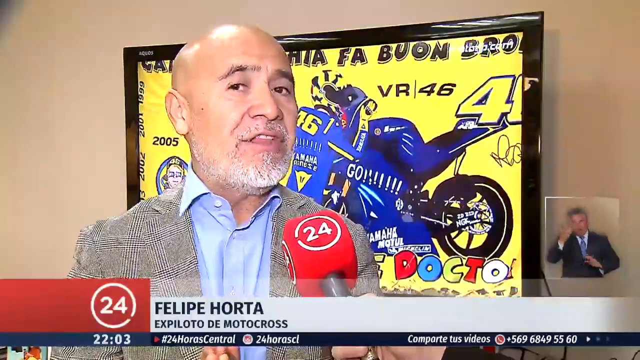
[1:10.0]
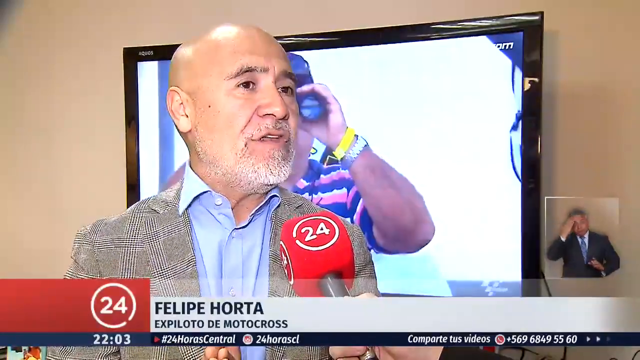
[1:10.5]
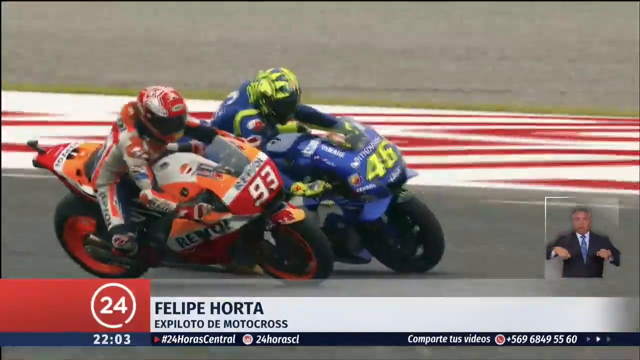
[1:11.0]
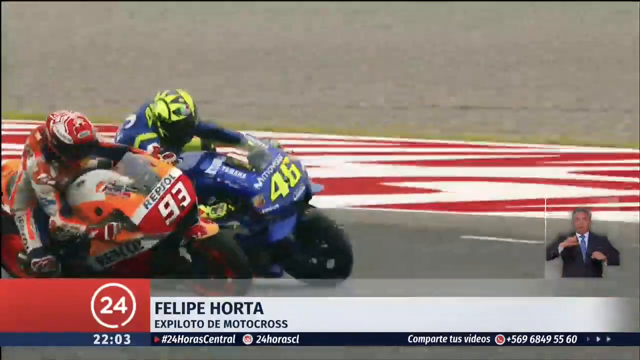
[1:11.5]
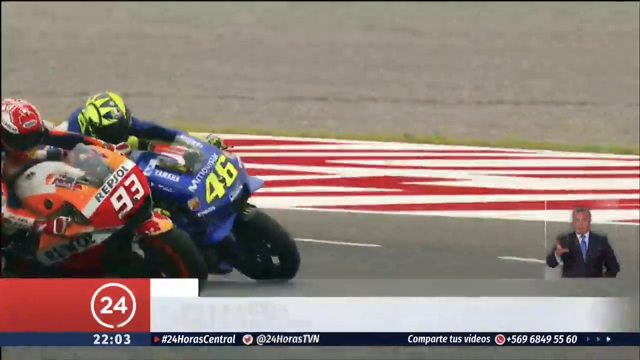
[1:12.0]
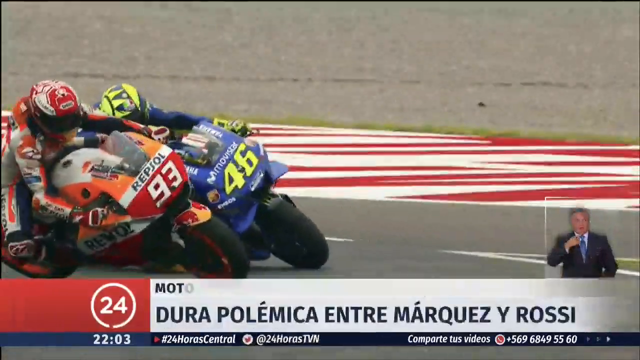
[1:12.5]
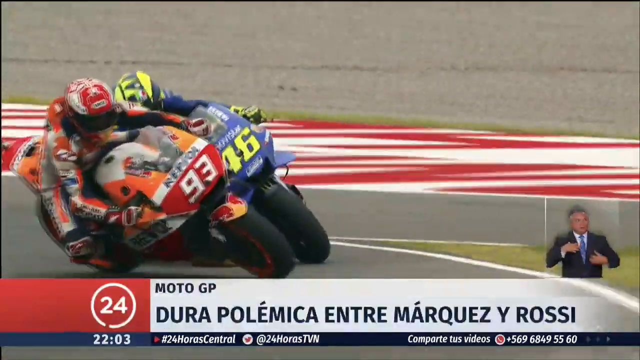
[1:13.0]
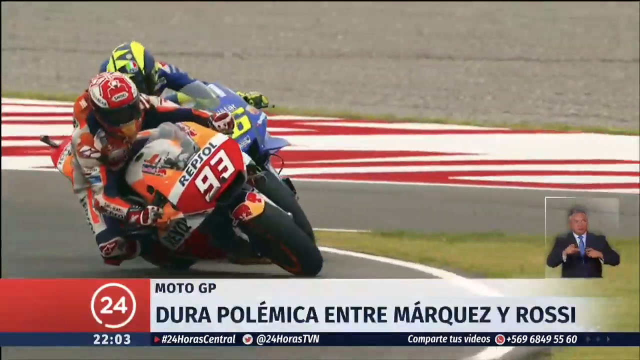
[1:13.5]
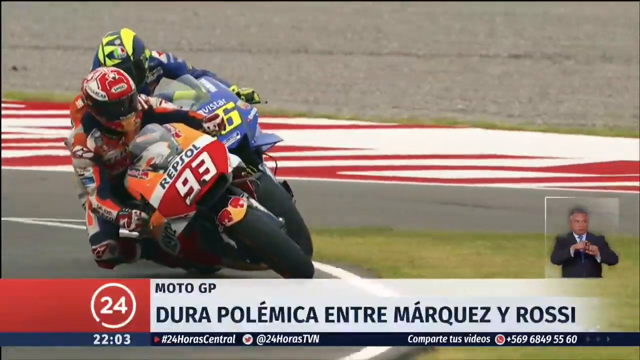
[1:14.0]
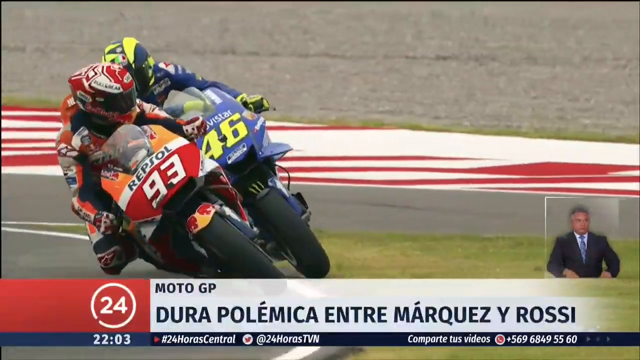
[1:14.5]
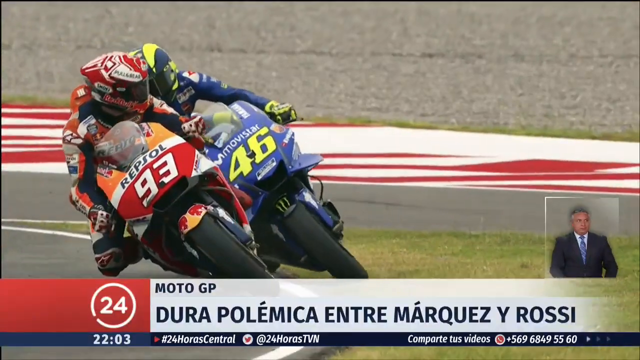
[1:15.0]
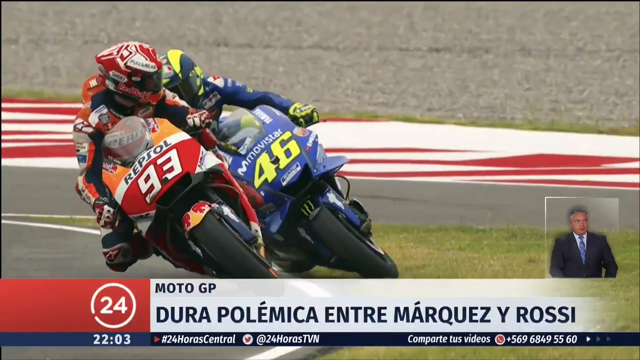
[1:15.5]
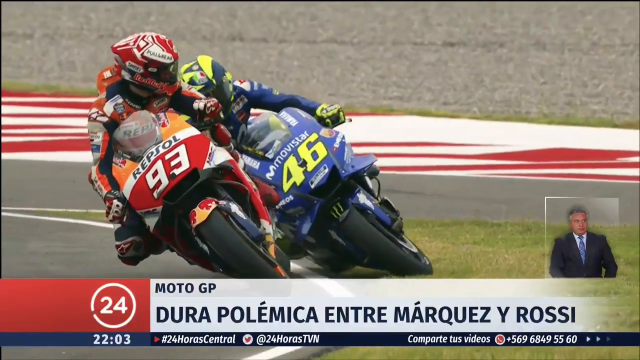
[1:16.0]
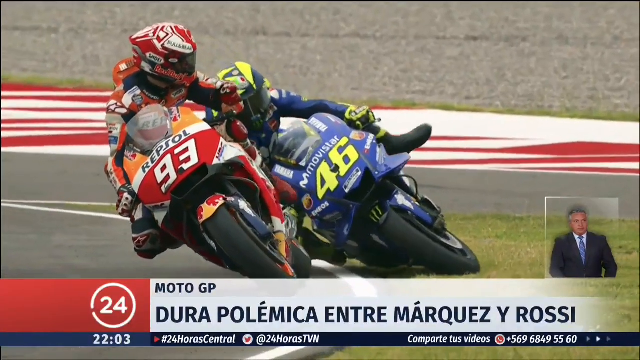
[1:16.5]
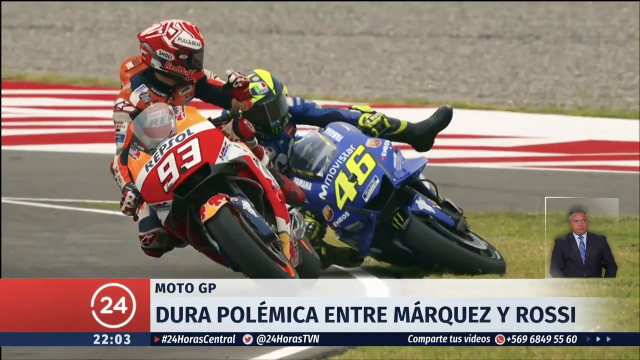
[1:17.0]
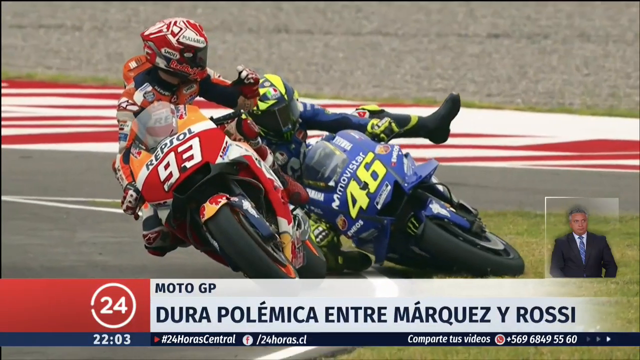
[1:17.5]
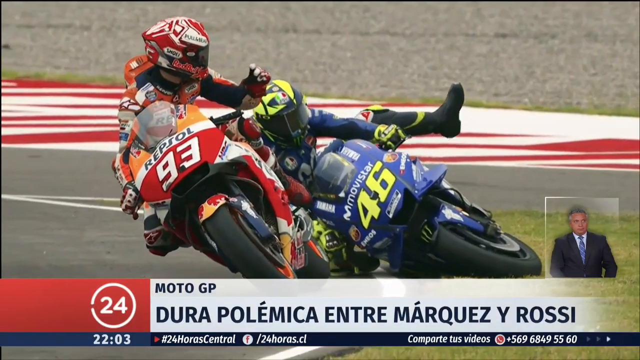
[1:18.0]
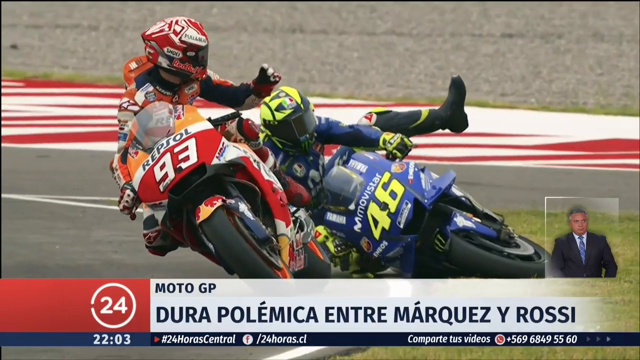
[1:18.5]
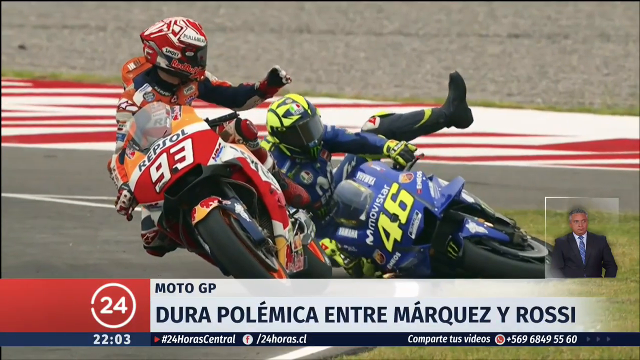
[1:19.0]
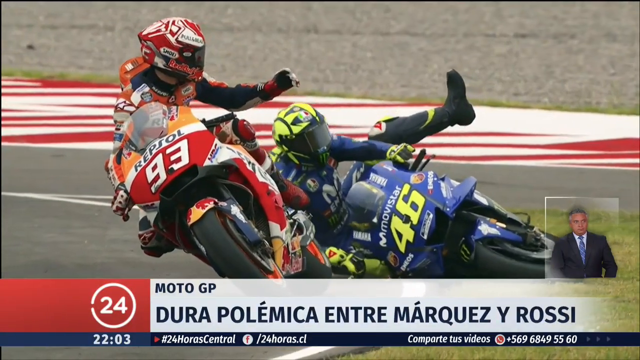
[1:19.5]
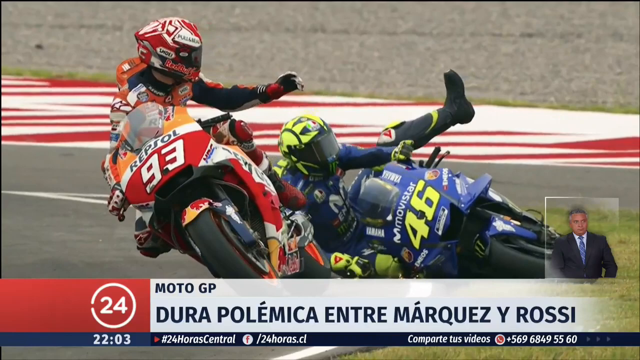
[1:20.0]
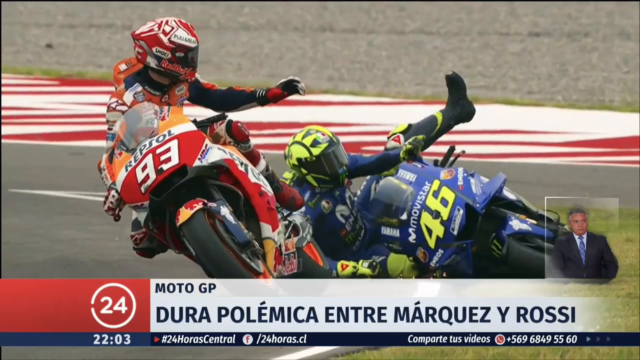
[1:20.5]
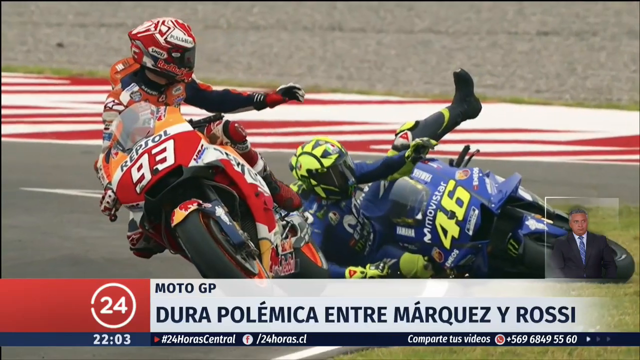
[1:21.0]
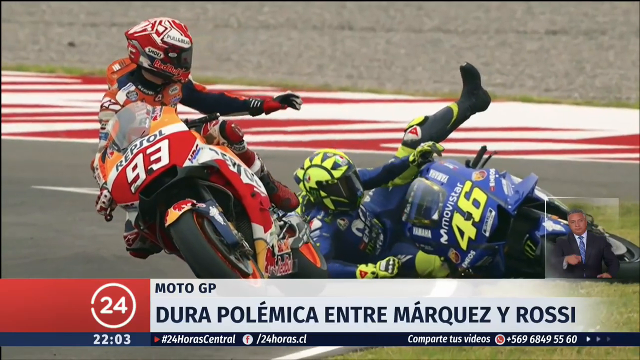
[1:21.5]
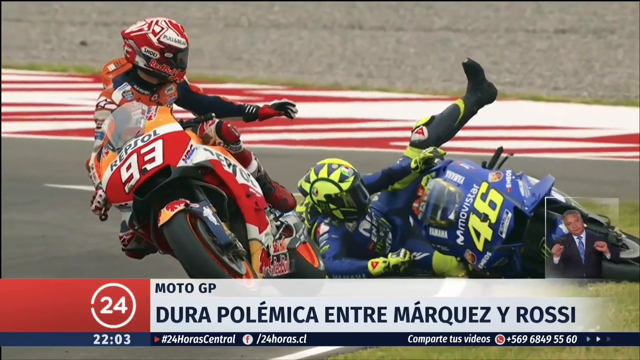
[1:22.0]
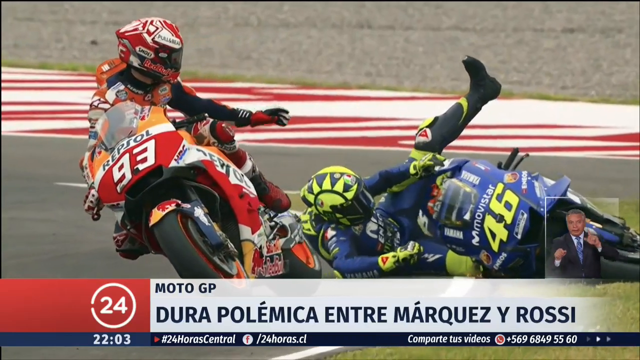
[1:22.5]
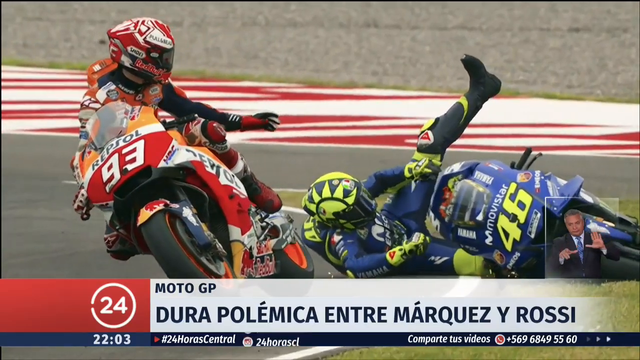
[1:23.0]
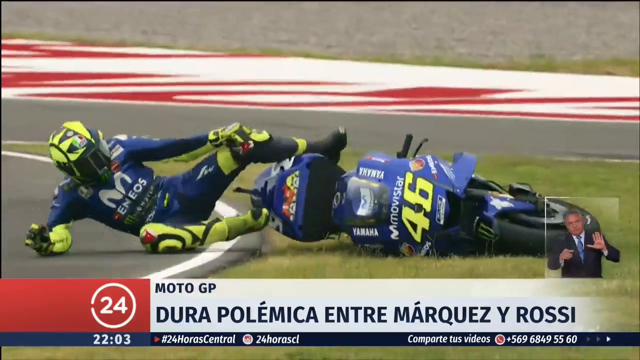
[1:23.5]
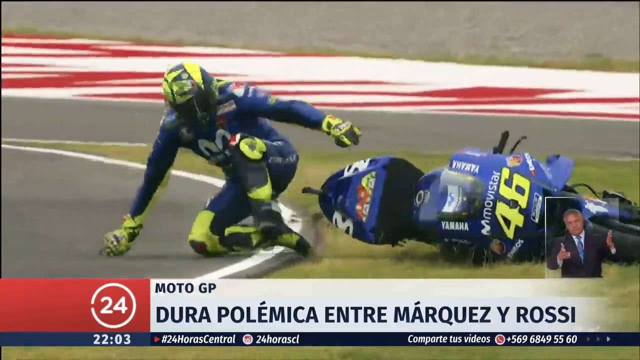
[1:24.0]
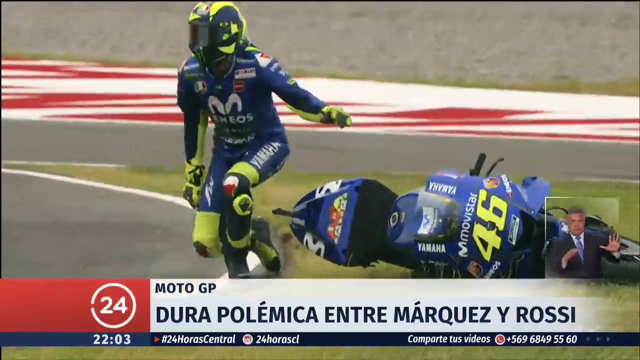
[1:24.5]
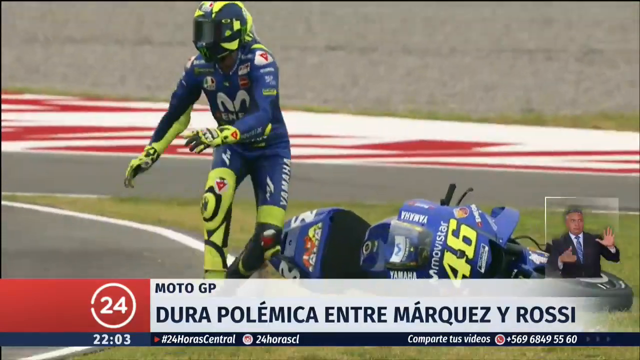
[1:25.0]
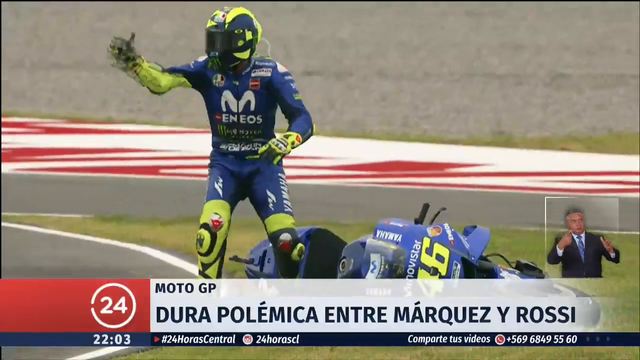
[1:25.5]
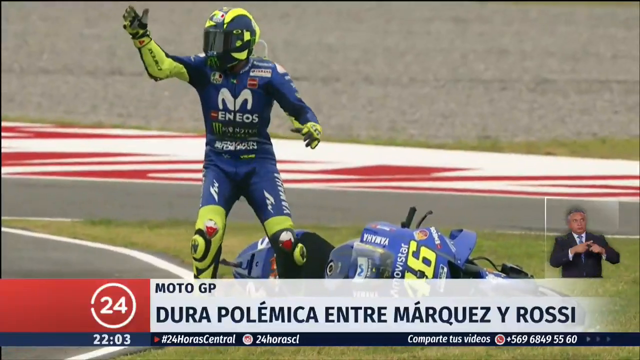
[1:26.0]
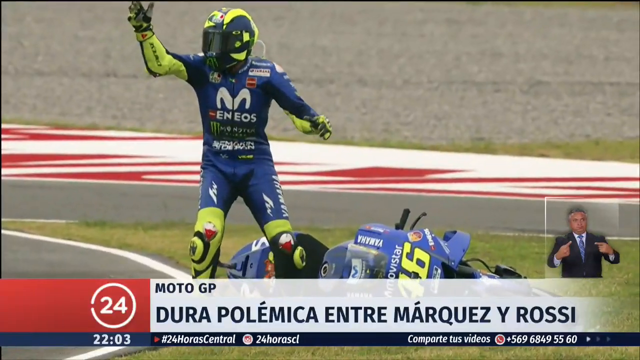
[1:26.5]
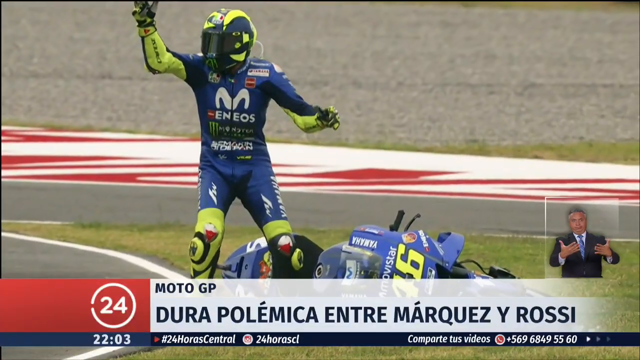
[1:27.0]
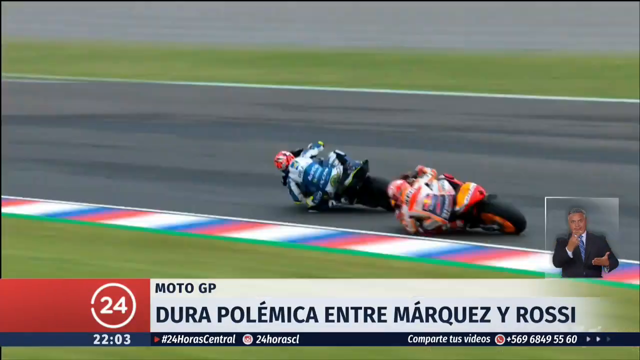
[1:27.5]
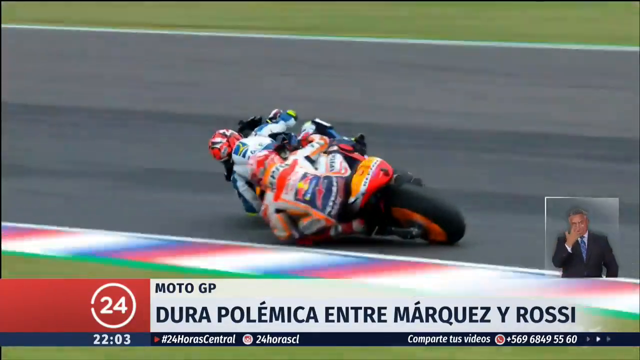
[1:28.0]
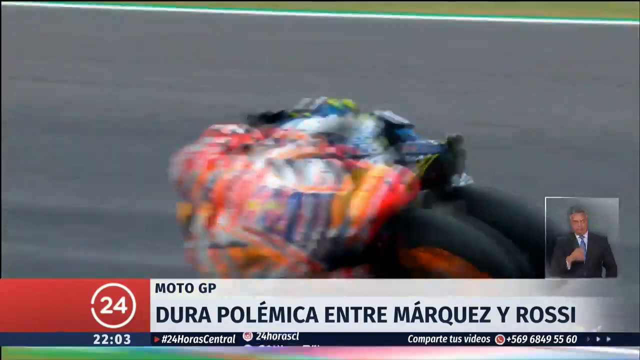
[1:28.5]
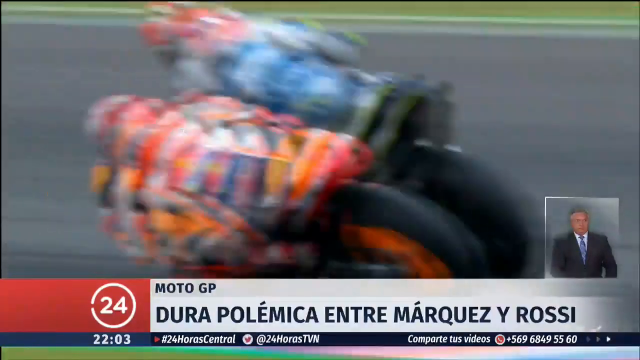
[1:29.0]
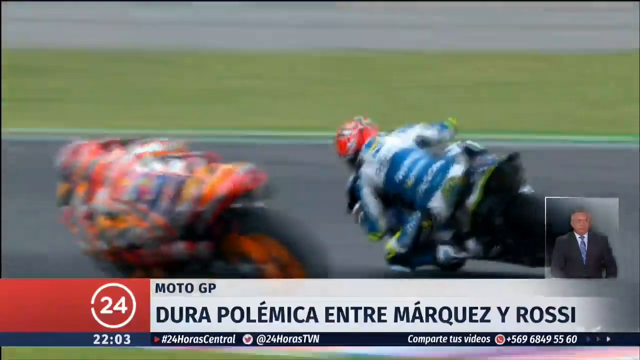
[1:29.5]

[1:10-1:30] The man being interviewed is again in front of the screen. The monitor shows almost a cartoon version, with "number 46 vr" on it, a motorcycle with some blue, and a jersey with some blue. The person being interviewed is Felipe Horta, and the other part is in Spanish. More footage shows motorcycles going around the track, numbers 93 and 46 in slow motion, with the interpreter in the little box on the right side of the screen. Number 46 falls off his motorcycle as they go into a turn in slow motion, then gets up and stands; he wears a blue outfit with "ENEOS" on his jersey and a black and yellow helmet. Some footage plays faster than normal speed. The view returns to the man being interviewed, with the red microphone bearing the number 24 in white and the interpreter on the right side.